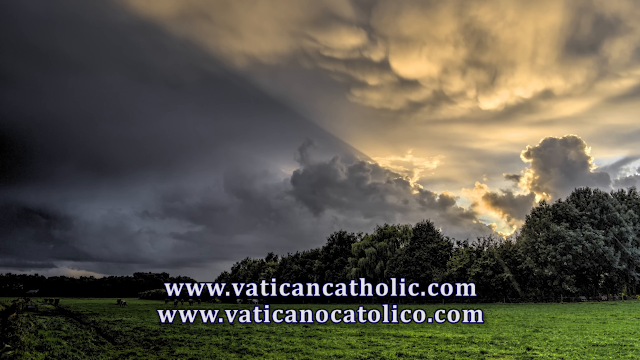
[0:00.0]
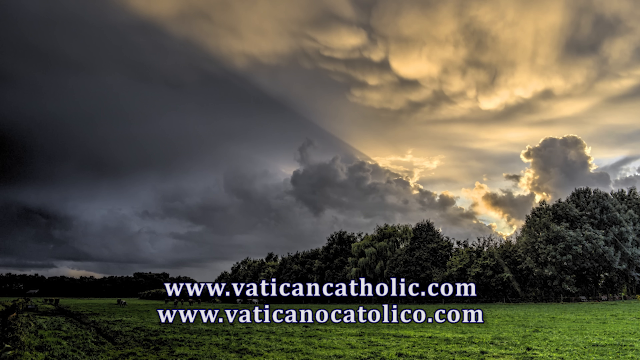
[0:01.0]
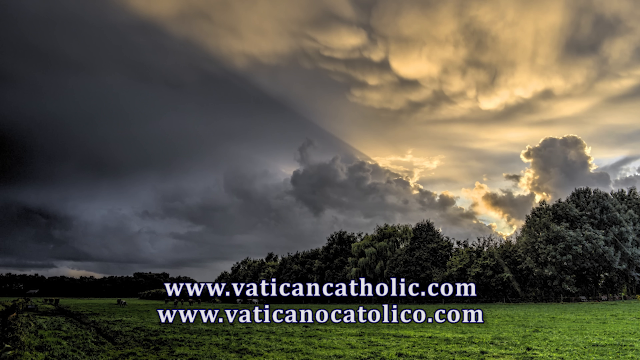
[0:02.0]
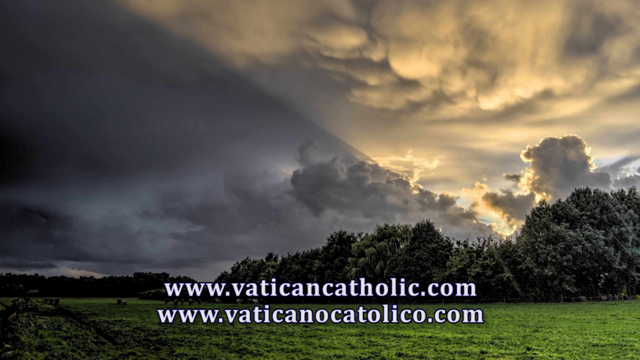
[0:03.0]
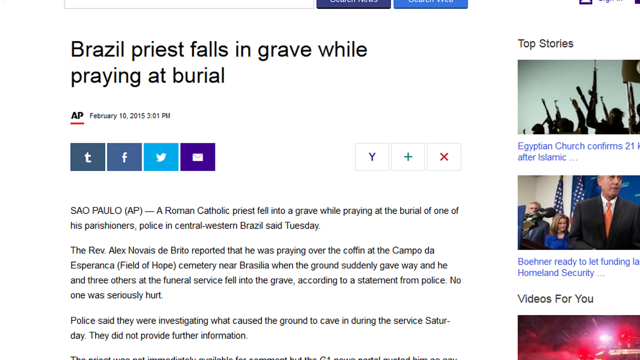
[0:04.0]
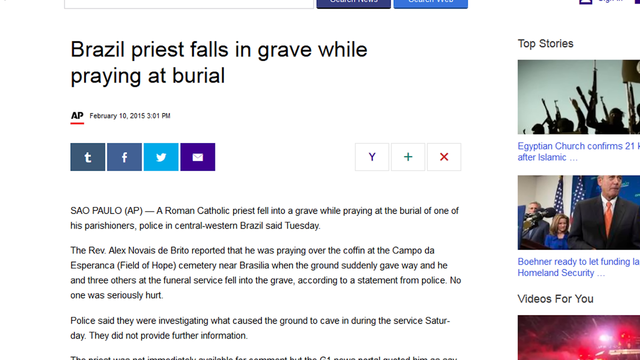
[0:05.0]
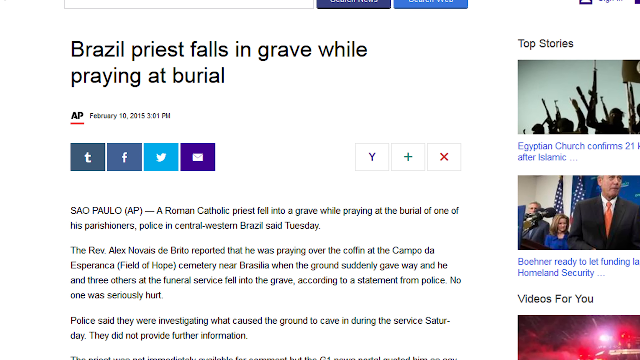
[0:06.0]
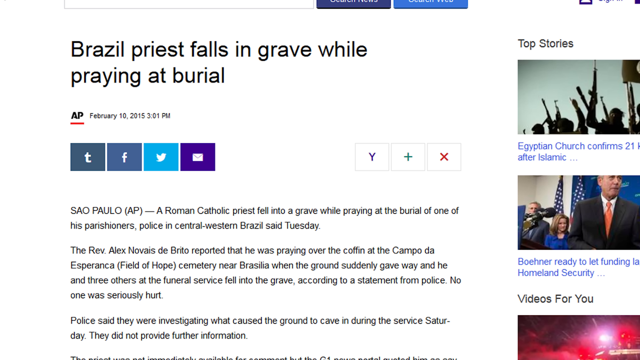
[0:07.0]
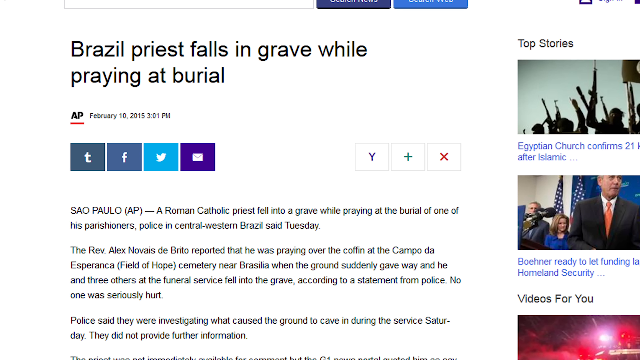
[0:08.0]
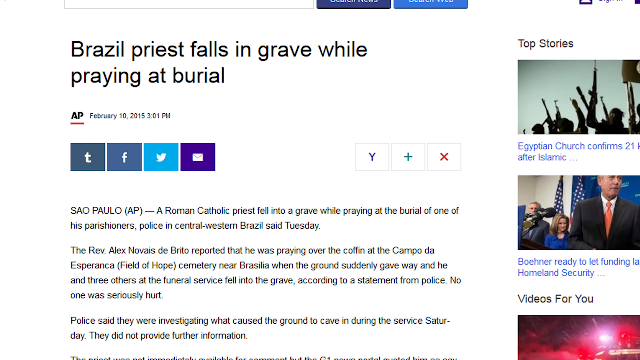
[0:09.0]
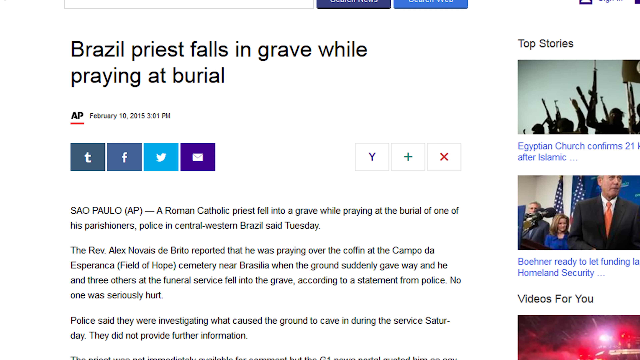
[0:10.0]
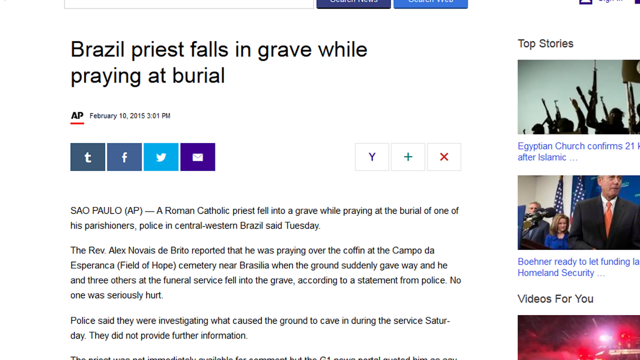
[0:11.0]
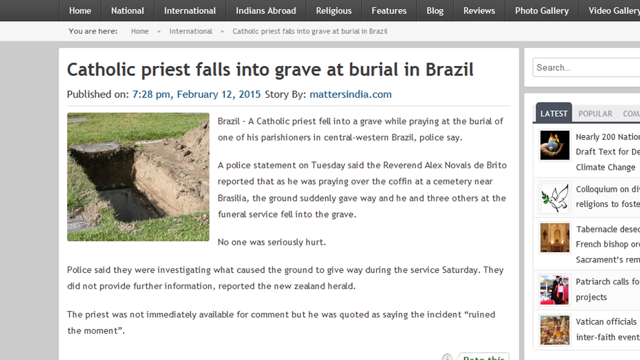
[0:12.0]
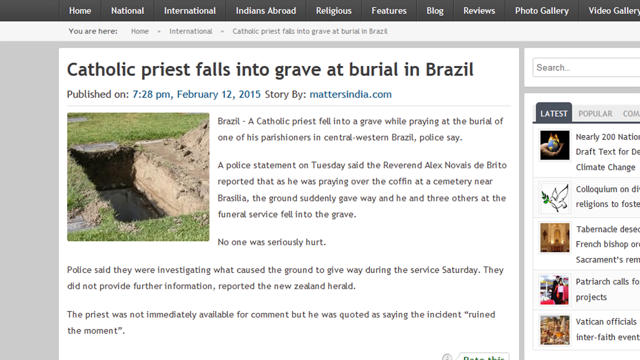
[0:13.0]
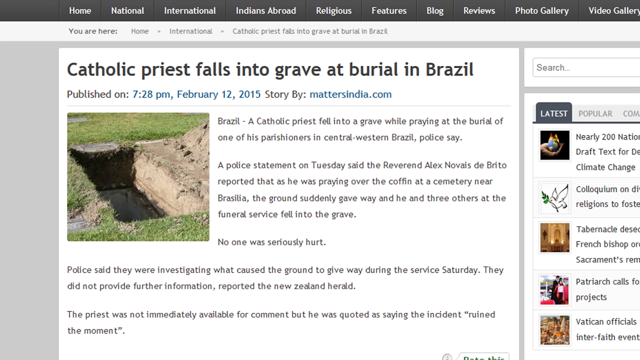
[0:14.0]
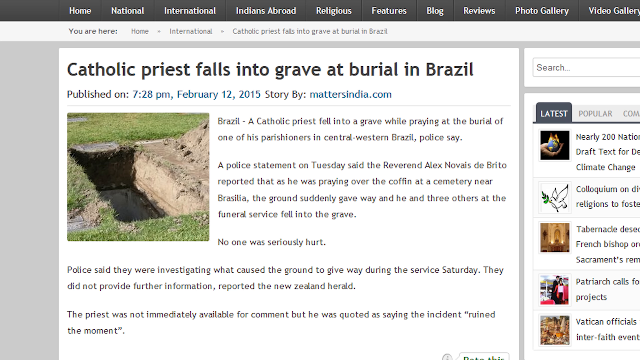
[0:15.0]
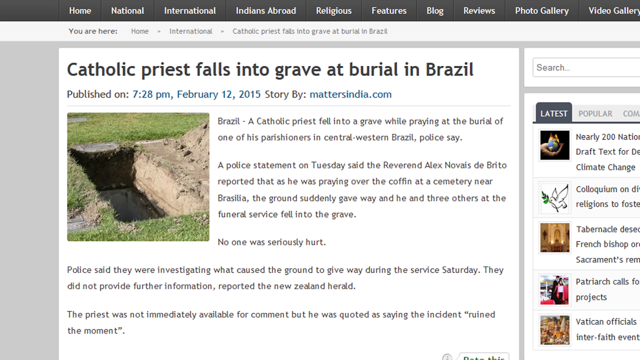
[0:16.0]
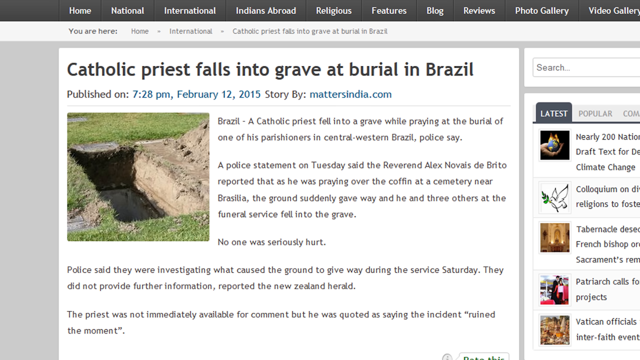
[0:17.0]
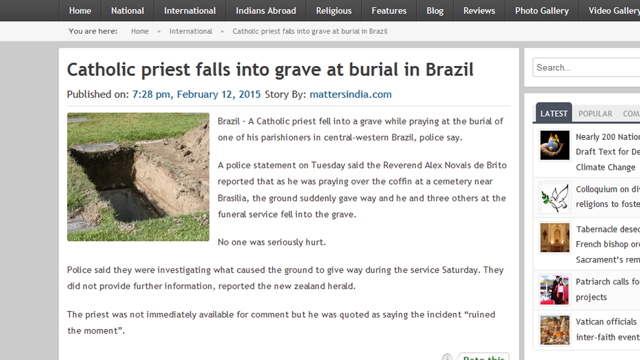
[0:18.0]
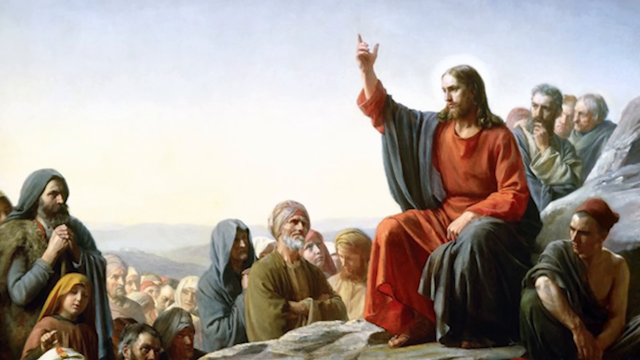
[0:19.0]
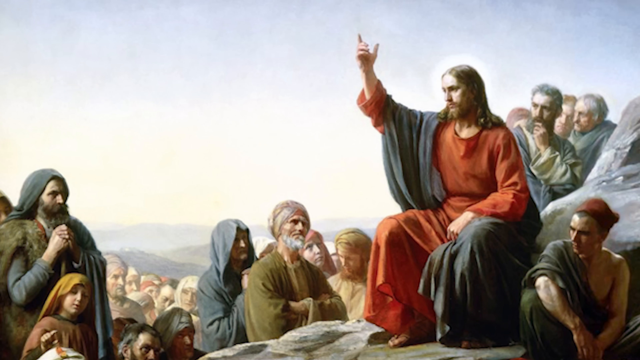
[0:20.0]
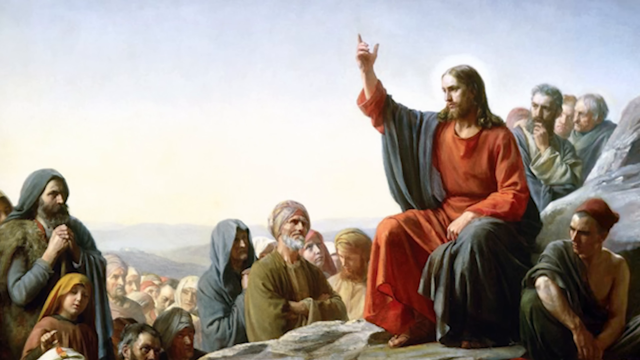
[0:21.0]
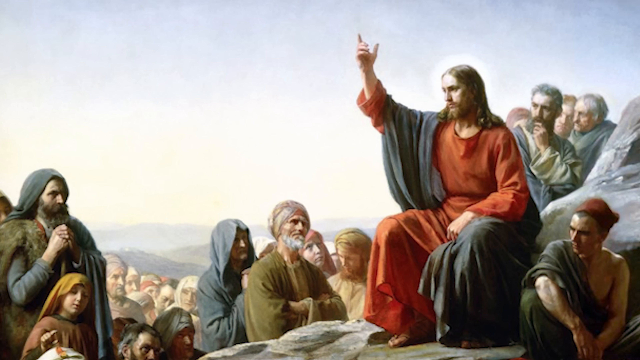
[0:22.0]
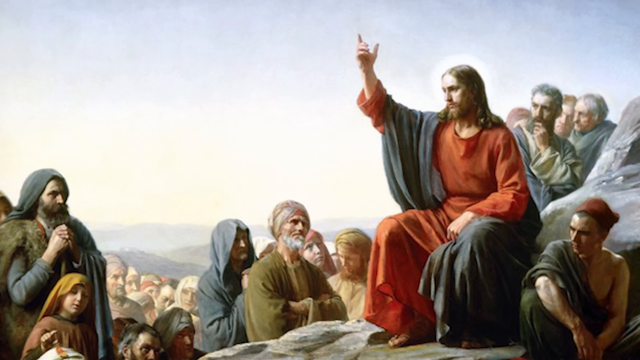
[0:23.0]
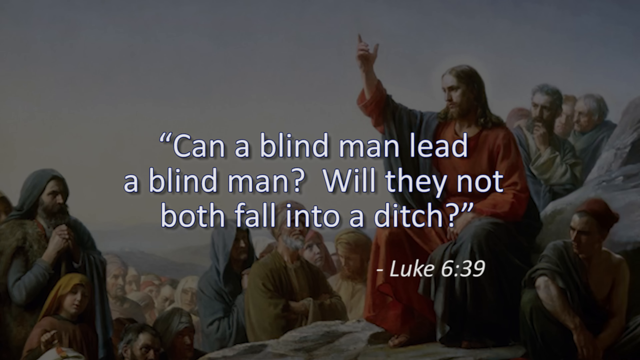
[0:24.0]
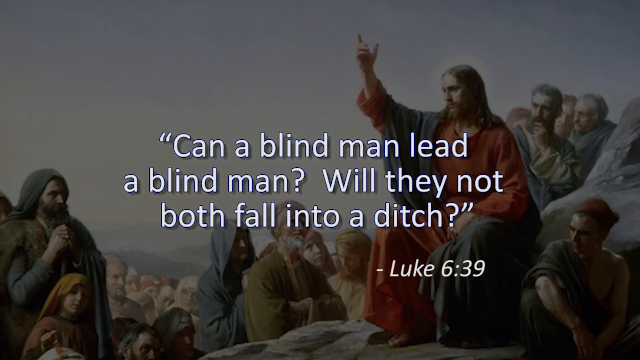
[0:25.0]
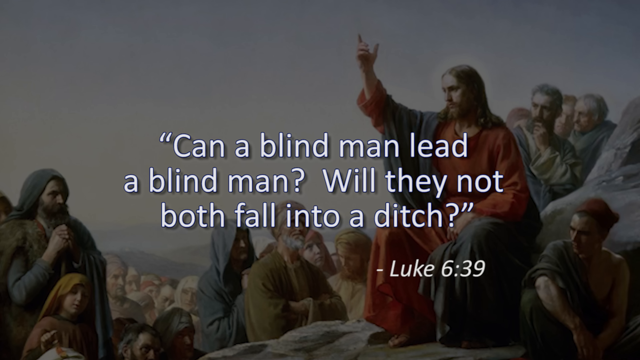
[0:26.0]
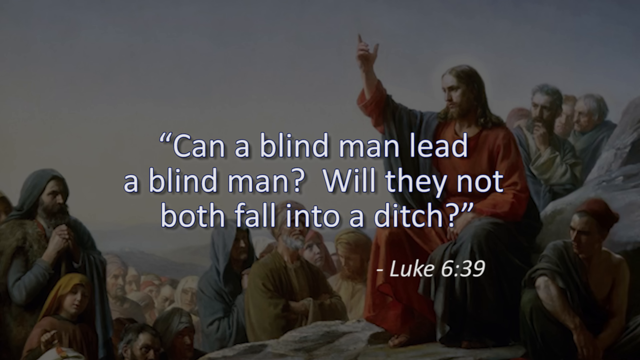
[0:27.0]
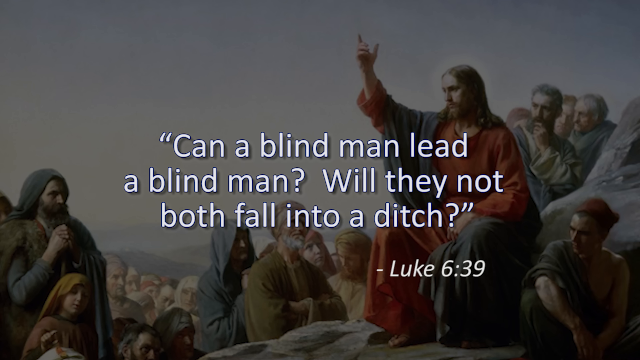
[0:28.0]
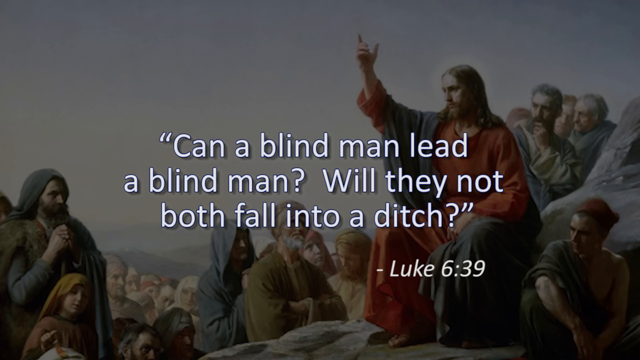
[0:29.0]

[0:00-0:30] A picture shows a group of tall trees with the sun behind them; the sun itself is not visible, but a single beam of light shoots over the tops of the trees through a sky full of grey clouds, and bright green grass surrounds the trees. Along the bottom of the screen is the text "www.vaticancatholic.com". The image cuts to a white screen with "Brazil priest falls in grave while praying at burial" at the top. It then cuts to another screen headed "Catholic priest falls into grave at burial in Brazil", with the text "Brazil a Catholic priest fell into a grave while praying at the burial of one of his parishioners in central western Brazil police say" underneath. Next comes a picture of Jesus sitting on a rock, wearing a red robe with a blue sash robe over top of it. People also dressed in robes, with their heads covered, sit on the ground in front of him. In the middle of the screen the text "can a blind man lead a blind man will they not both fall into a ditch" appears, with "Luke 6 39" underneath.